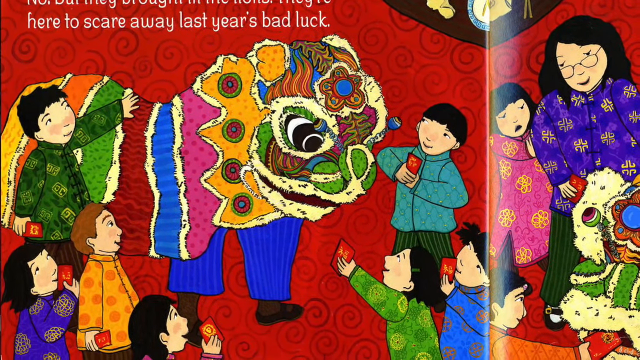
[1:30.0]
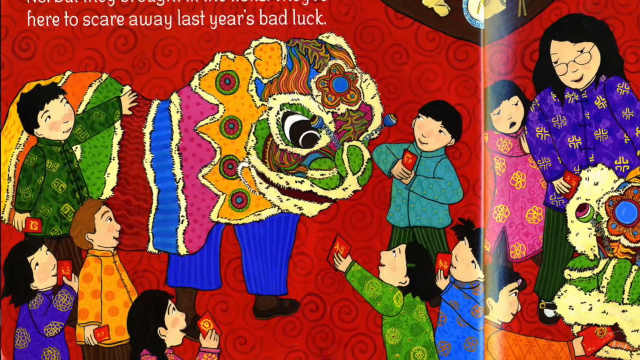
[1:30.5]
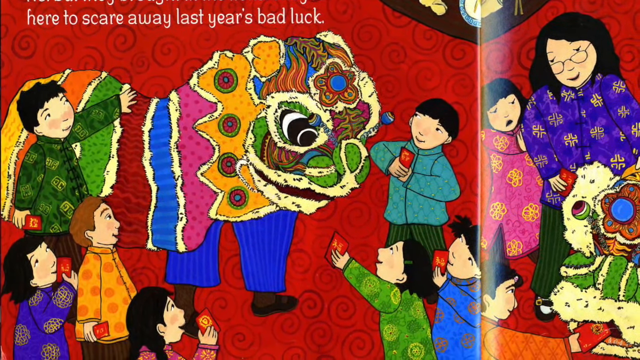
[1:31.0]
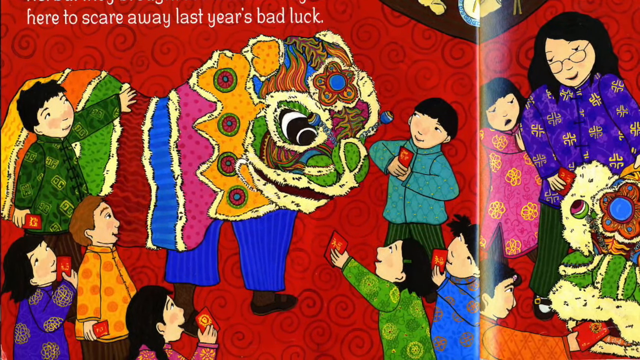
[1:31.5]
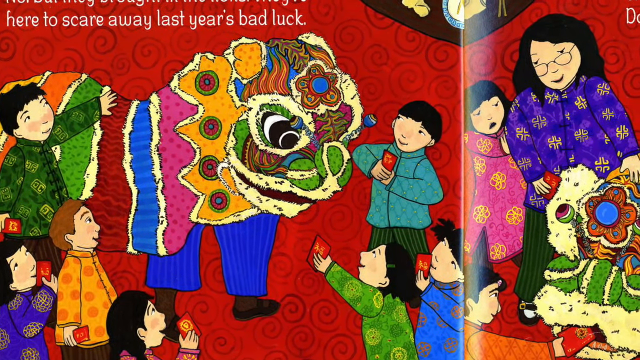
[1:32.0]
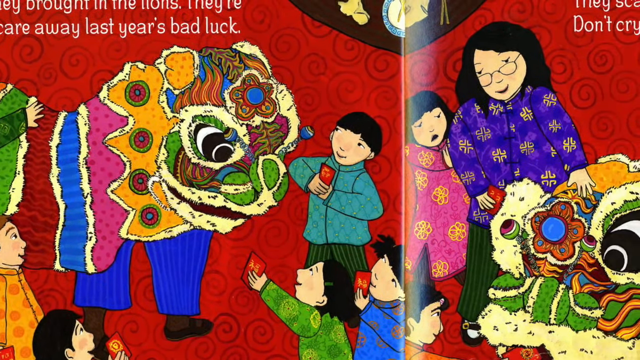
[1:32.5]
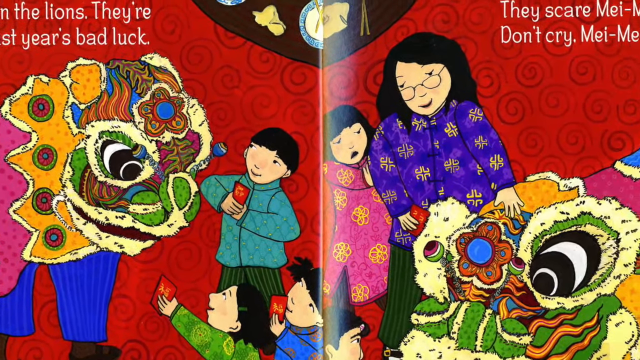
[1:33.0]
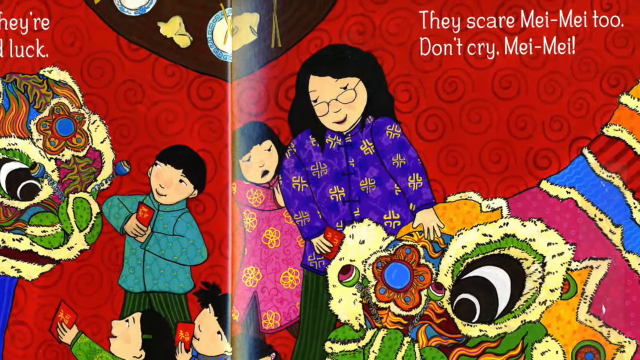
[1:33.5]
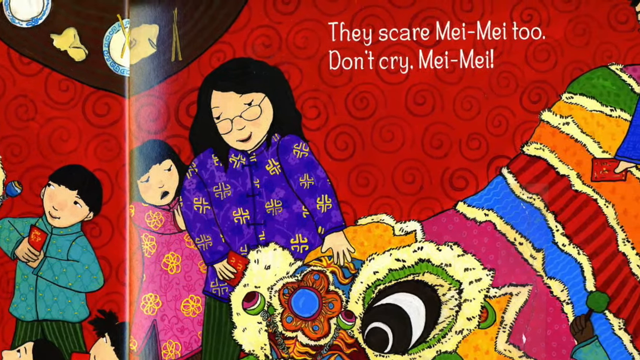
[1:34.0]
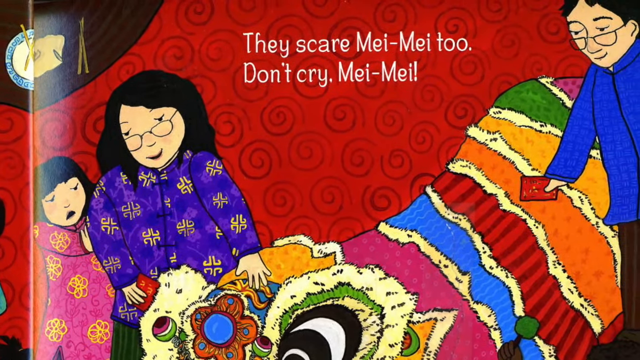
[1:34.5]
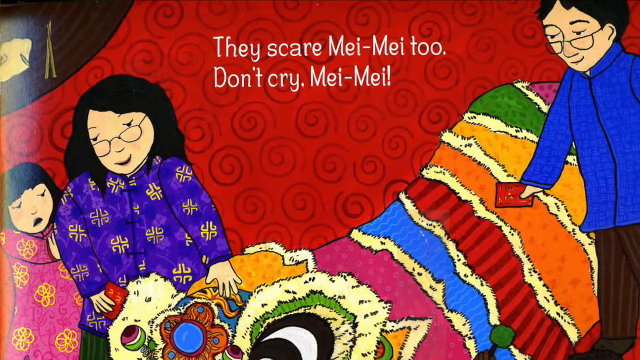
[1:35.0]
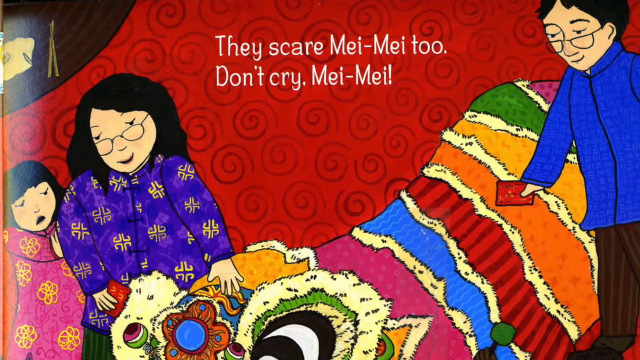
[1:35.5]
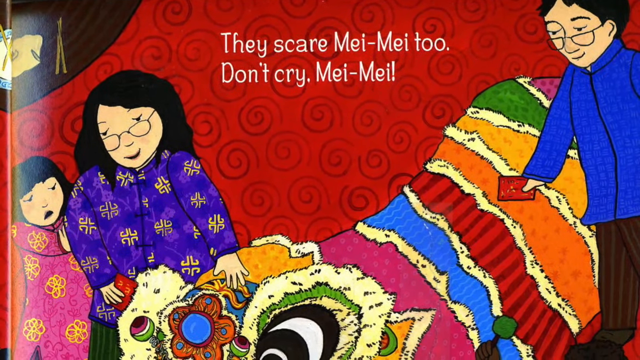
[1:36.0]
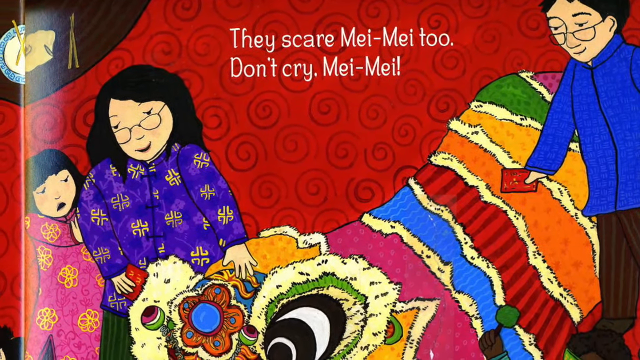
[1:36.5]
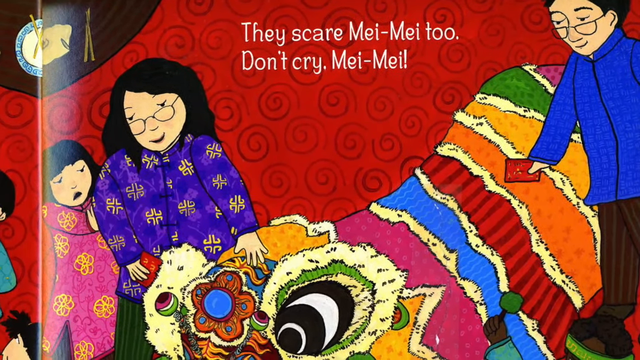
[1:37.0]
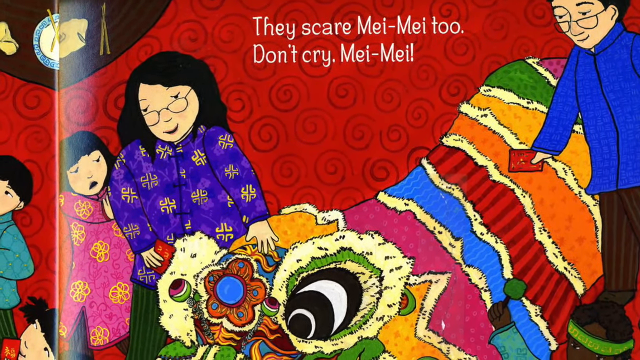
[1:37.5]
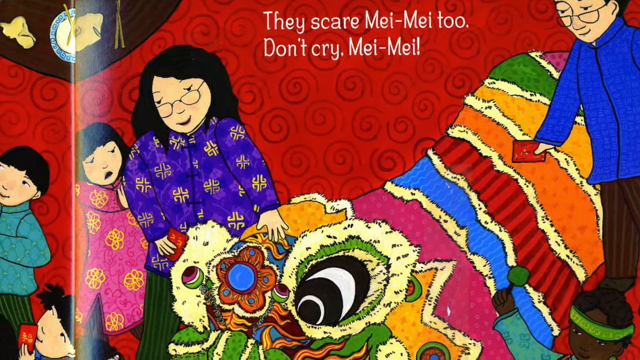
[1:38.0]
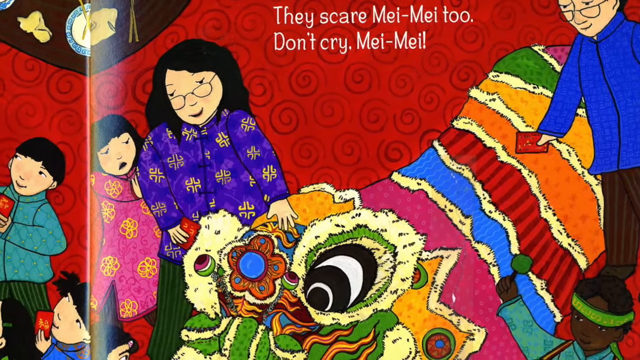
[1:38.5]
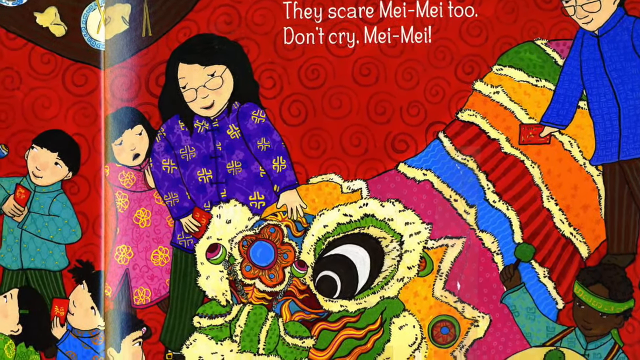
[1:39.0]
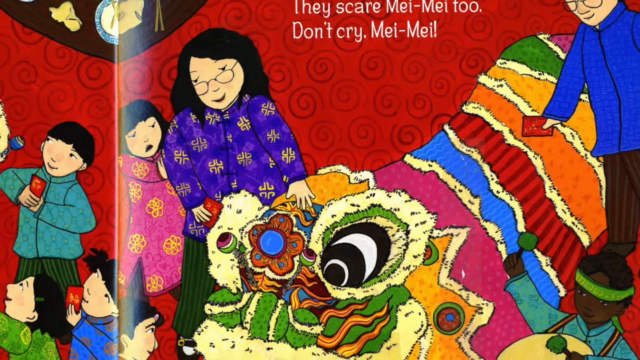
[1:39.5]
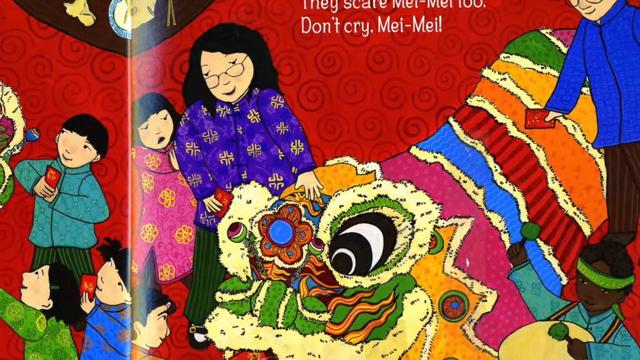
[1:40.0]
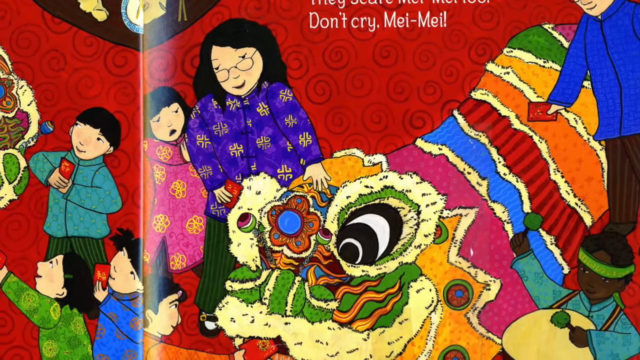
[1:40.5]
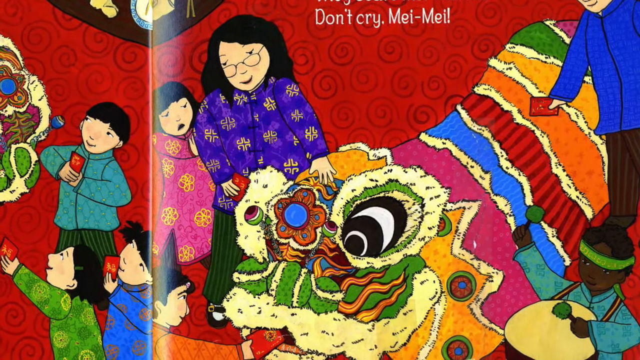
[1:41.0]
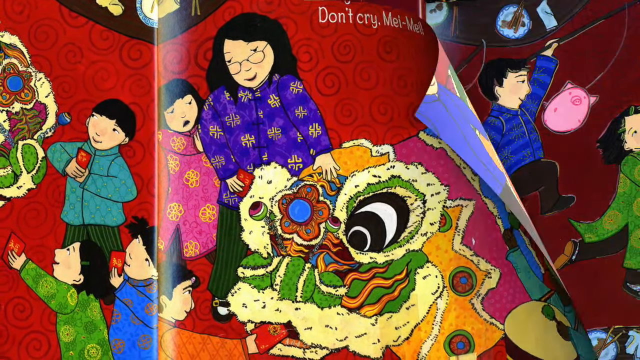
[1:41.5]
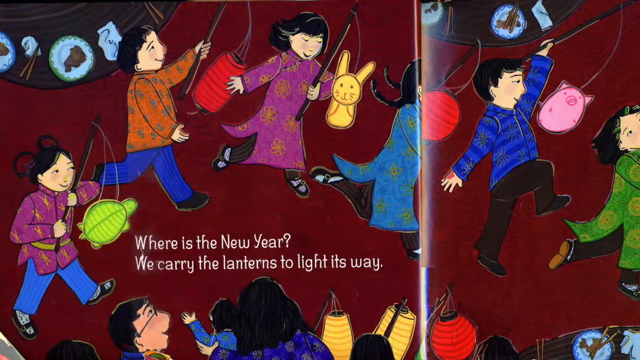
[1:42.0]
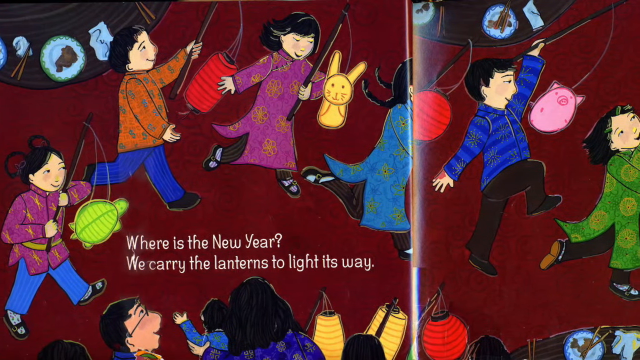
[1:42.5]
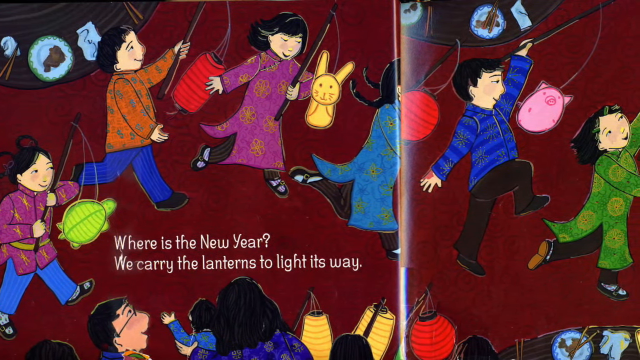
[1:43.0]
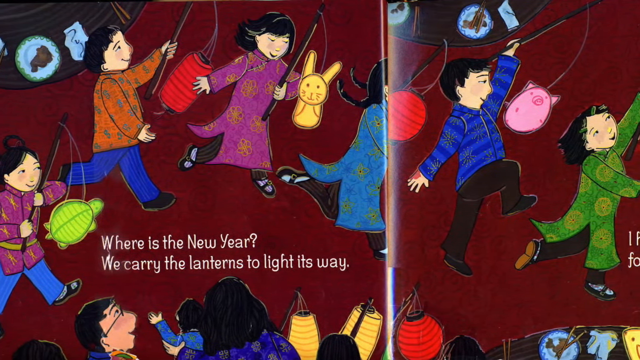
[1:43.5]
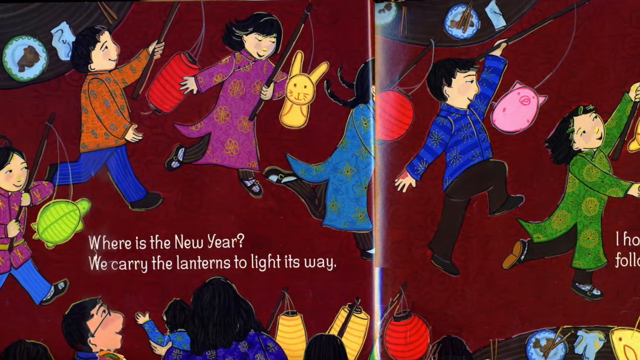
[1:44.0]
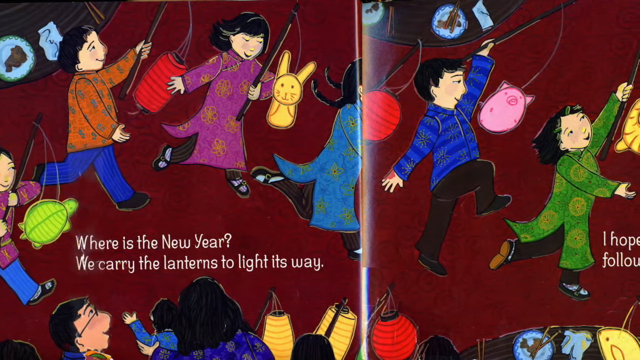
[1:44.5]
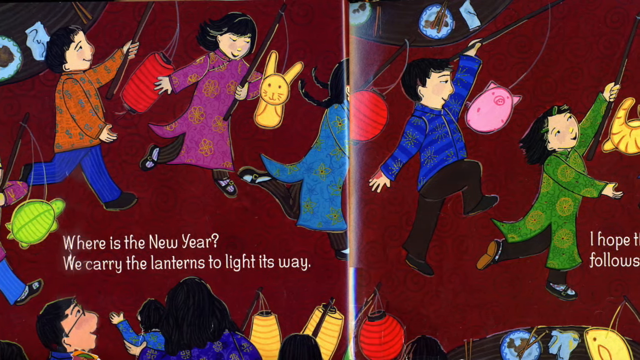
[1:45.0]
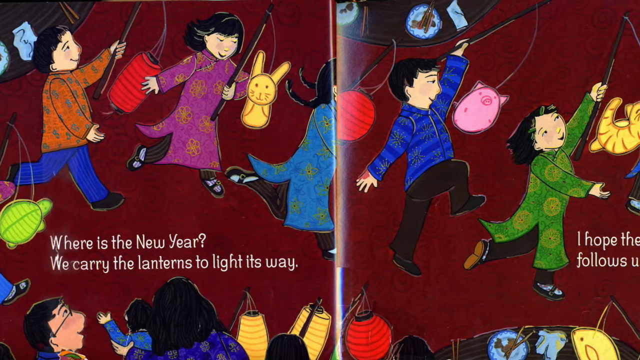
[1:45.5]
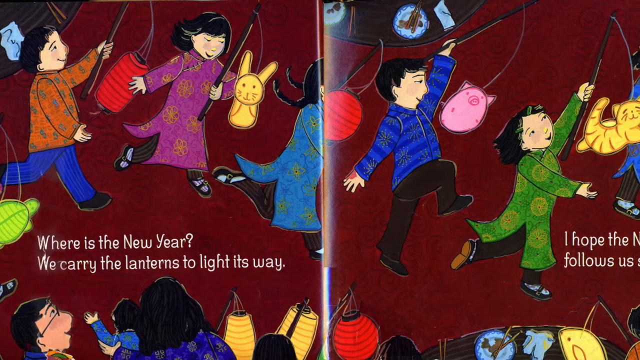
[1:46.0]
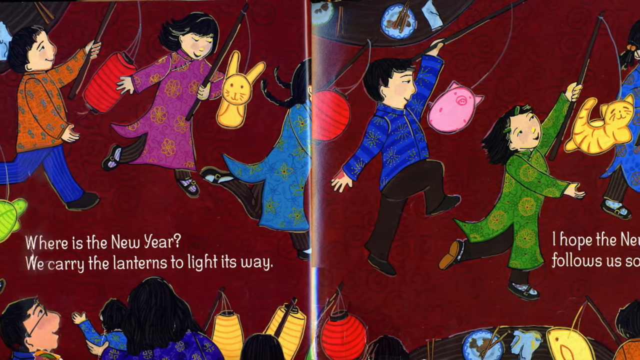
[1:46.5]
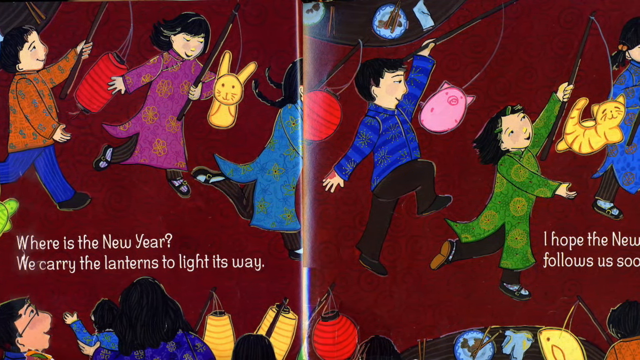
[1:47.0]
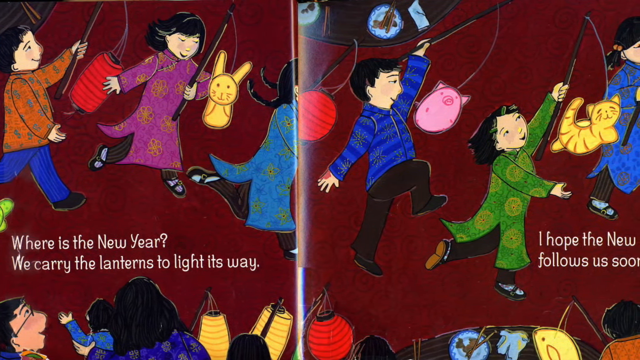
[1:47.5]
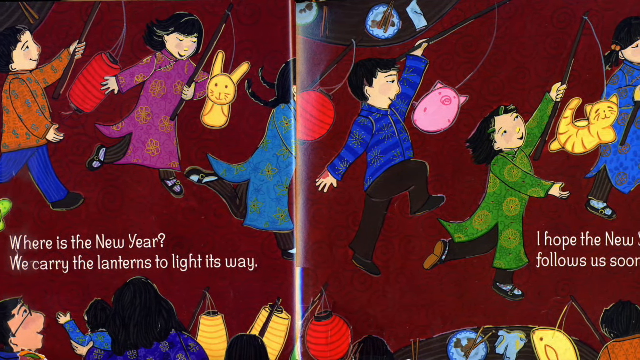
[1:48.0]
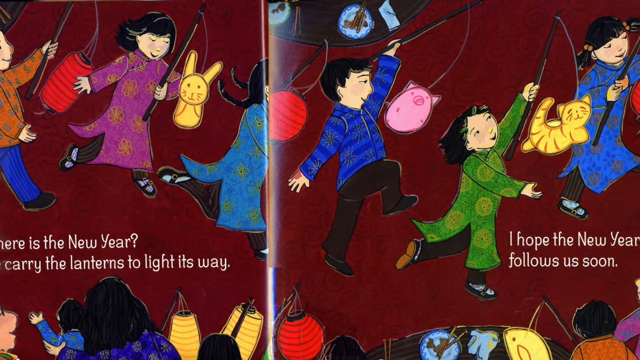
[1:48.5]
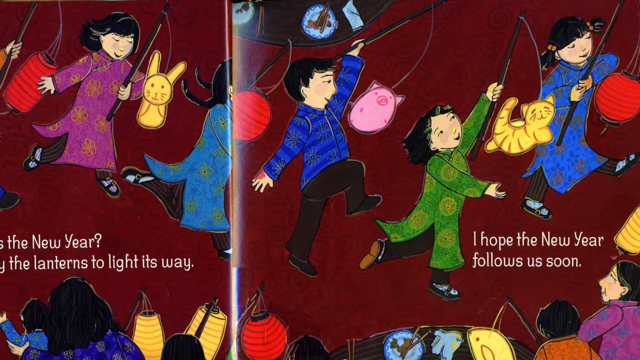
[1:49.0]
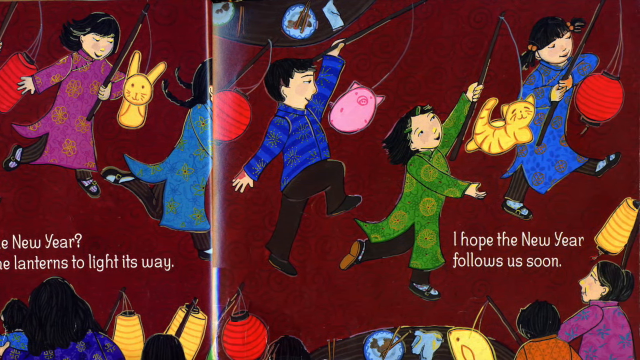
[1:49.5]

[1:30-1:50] The image shows the lion with the boys and other children around it, most of them holding red envelopes. A small image of a plate with a couple of dumplings is at the top. Text reads "no, they brought in the lions. They're here to scare away last year's bad luck." On the right side of the same page it says "they scare Mei Mei too. Don't cry Mei Mei". The view zooms out a little on the page, seemingly to show Mei Mei that it is not a real lion. The page changes to a group of kids running around, looking like they may be enacting a play. Some hold lanterns on a stick and some hold animals: one with a turtle, one with a bunny, one with a pig, and two with lanterns. On the left, under the children, the text reads "where is the new year? We carry the lanterns to light its way." As the view moves right, it reveals a child holding a kitty lantern and another red circle lantern, and beside those children the text reads "I hope the new year follows us soon."